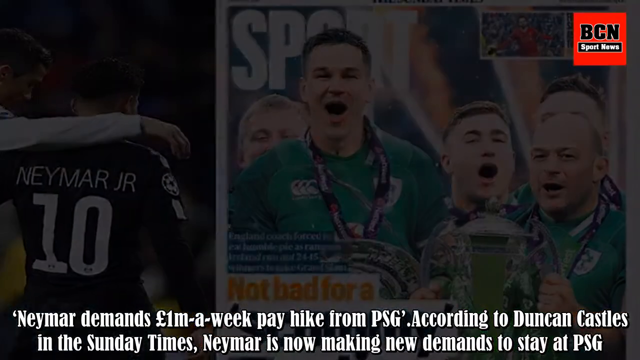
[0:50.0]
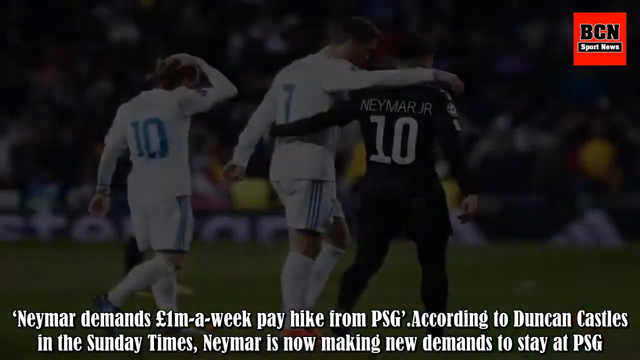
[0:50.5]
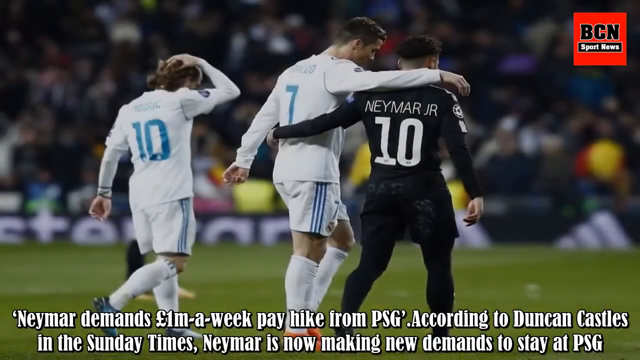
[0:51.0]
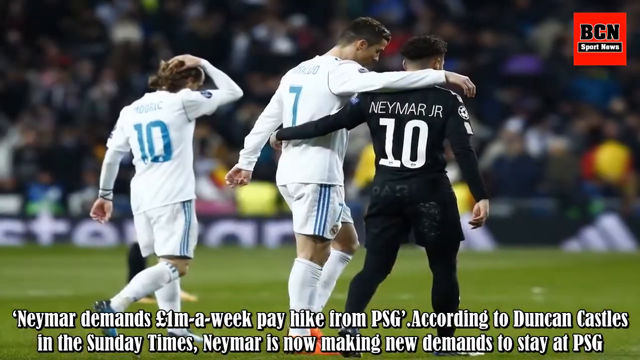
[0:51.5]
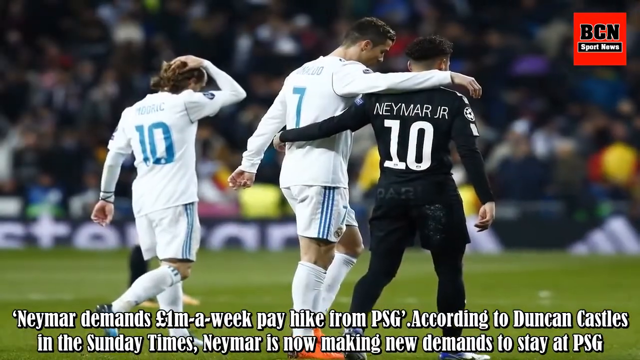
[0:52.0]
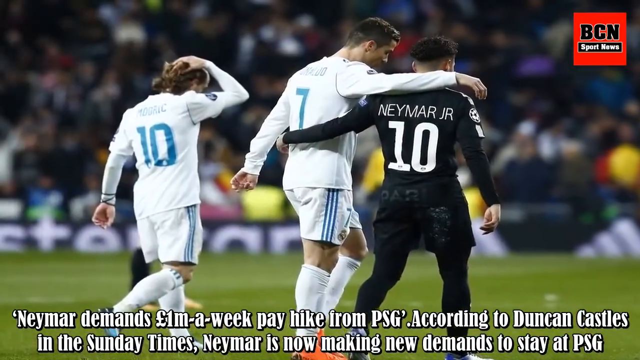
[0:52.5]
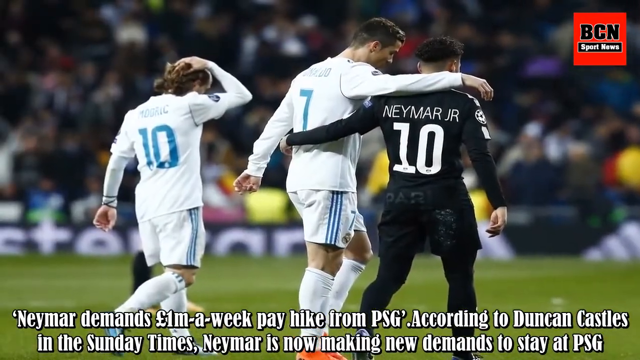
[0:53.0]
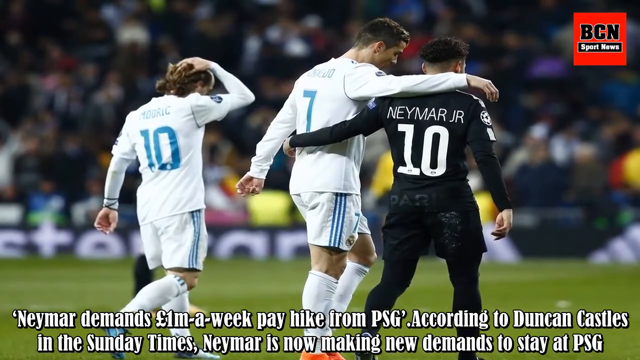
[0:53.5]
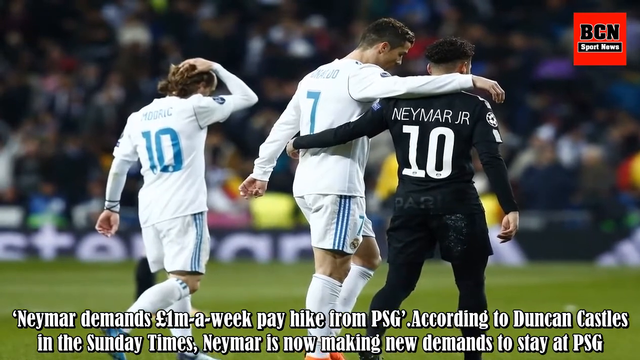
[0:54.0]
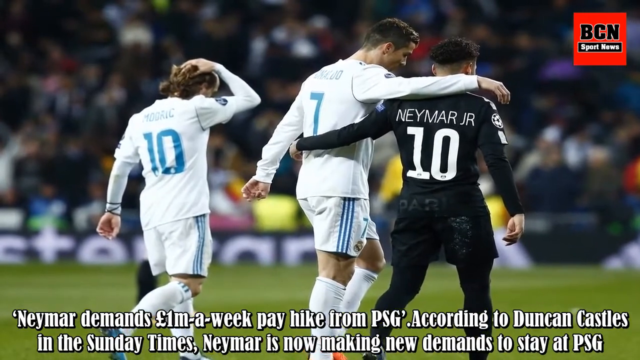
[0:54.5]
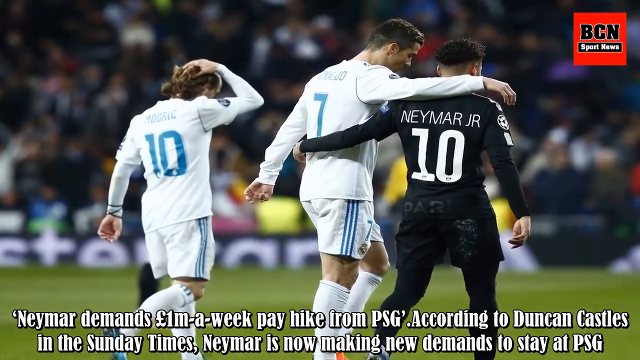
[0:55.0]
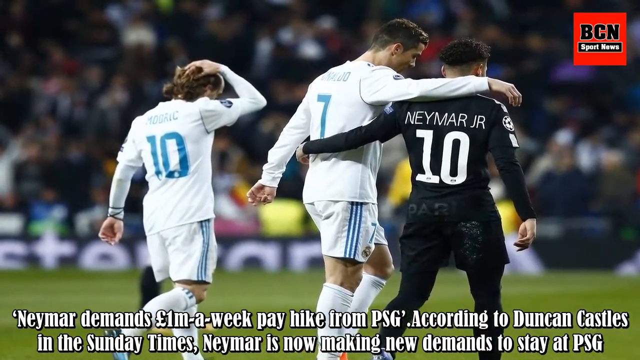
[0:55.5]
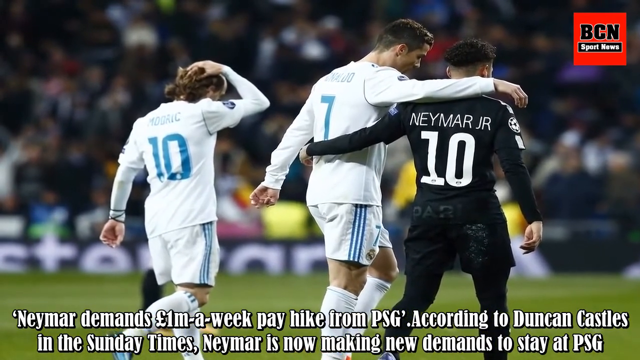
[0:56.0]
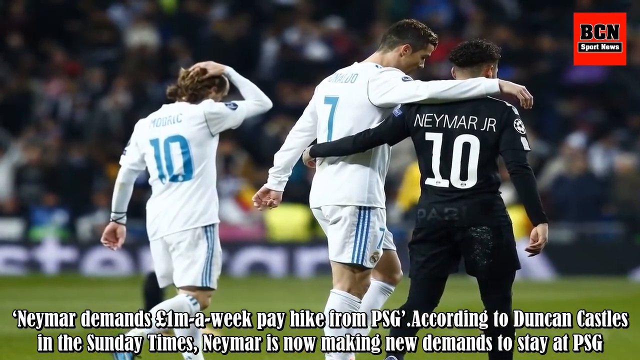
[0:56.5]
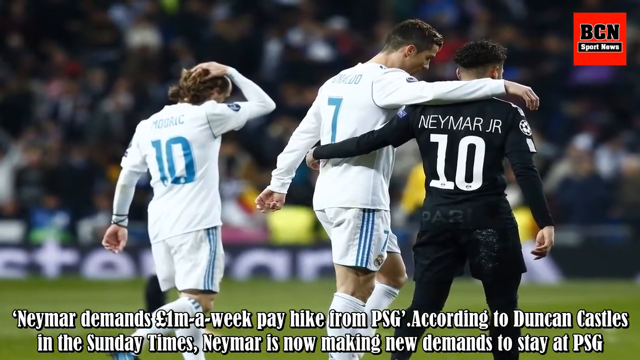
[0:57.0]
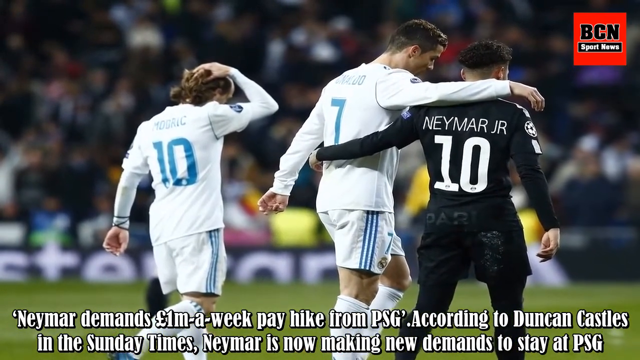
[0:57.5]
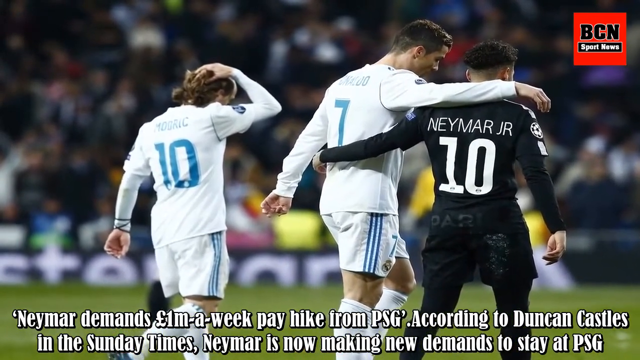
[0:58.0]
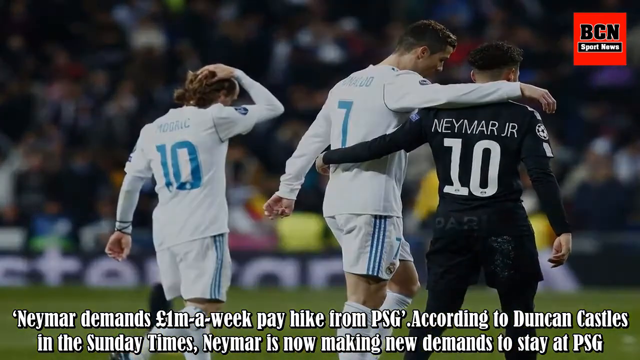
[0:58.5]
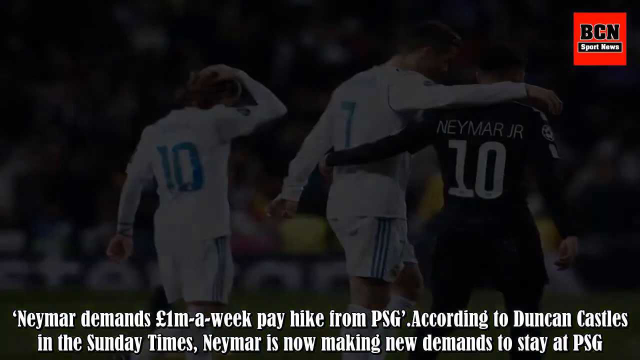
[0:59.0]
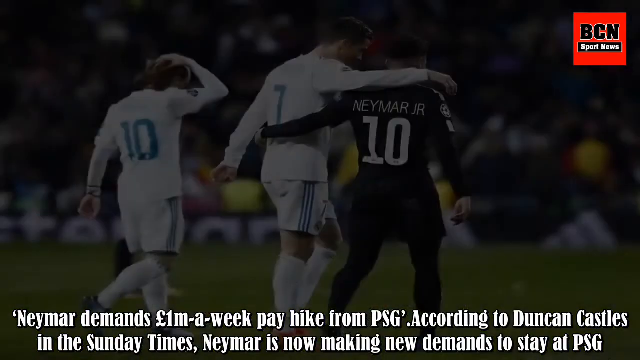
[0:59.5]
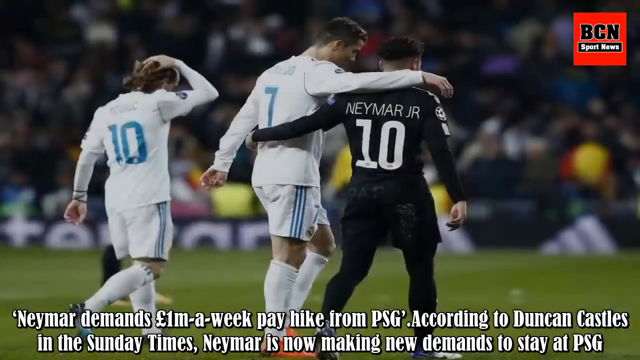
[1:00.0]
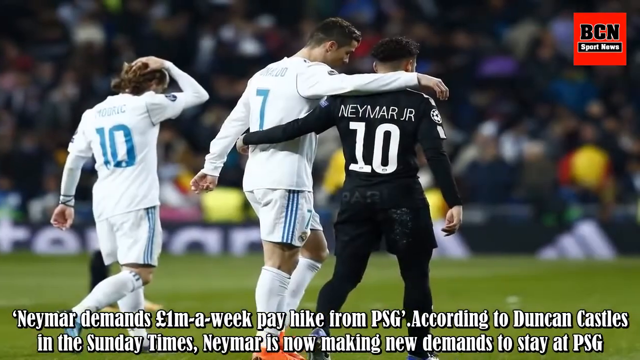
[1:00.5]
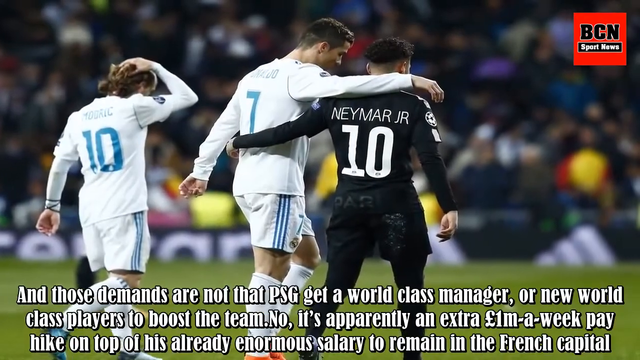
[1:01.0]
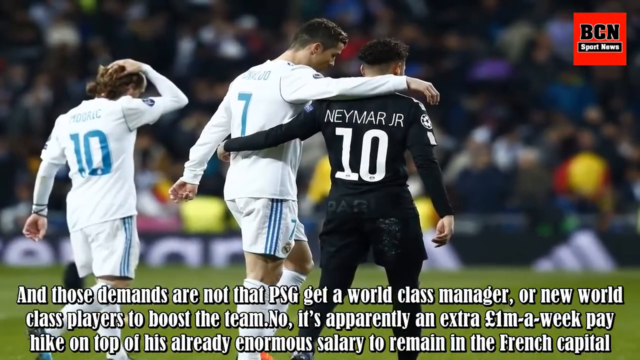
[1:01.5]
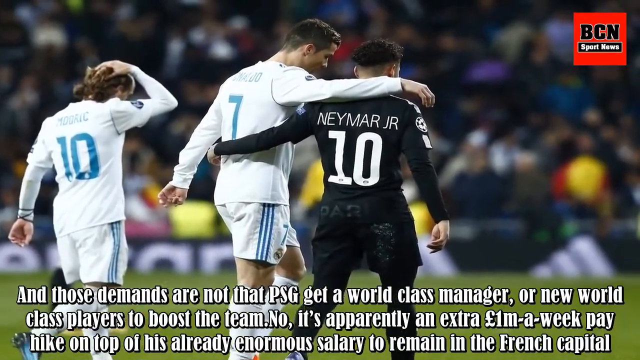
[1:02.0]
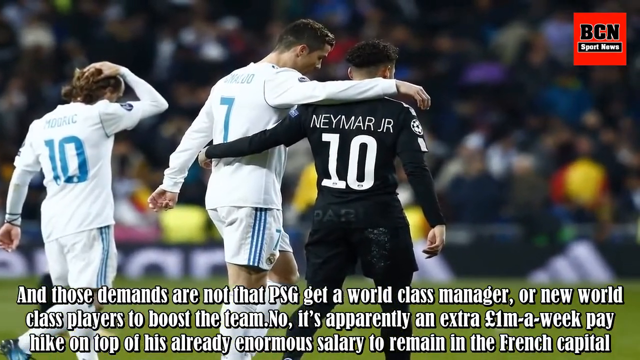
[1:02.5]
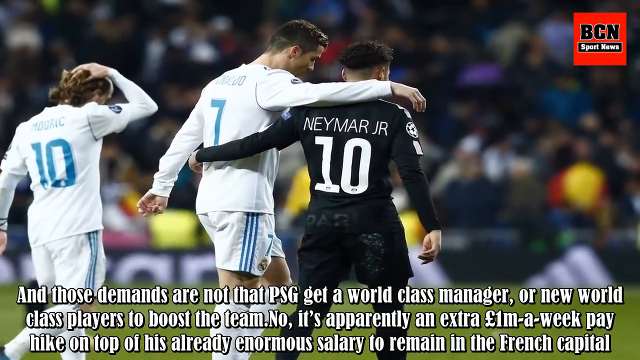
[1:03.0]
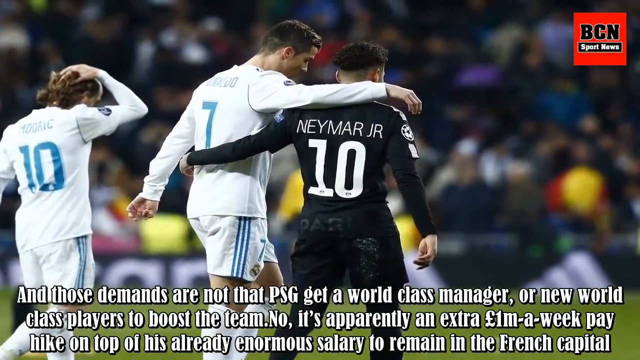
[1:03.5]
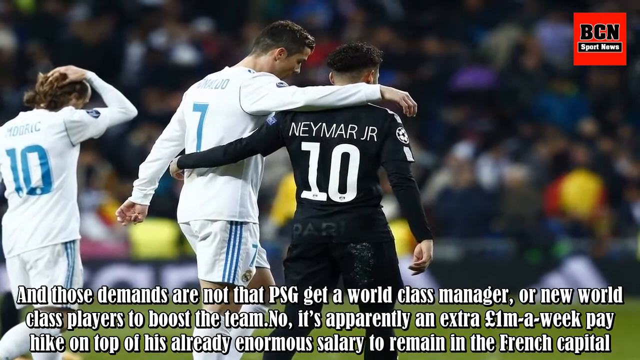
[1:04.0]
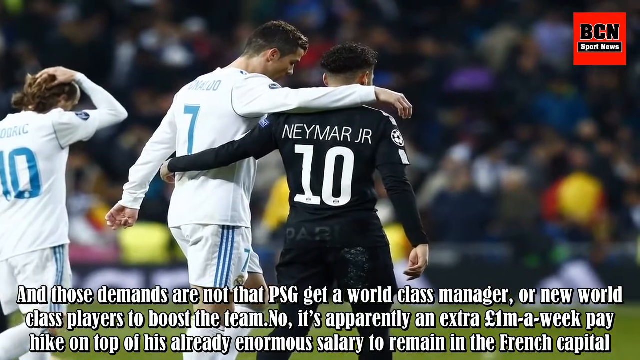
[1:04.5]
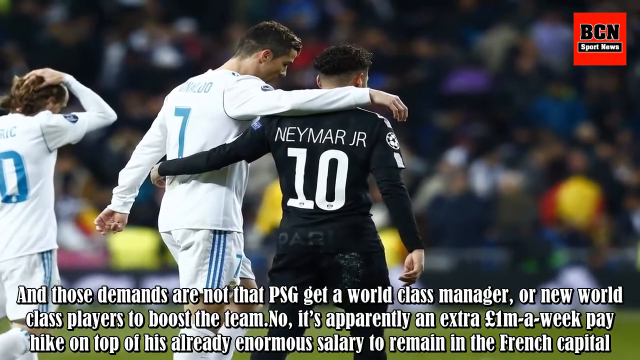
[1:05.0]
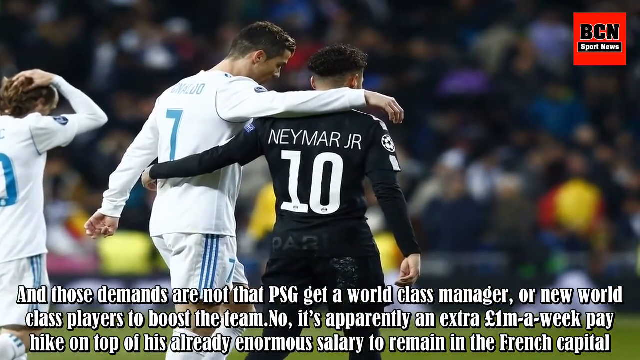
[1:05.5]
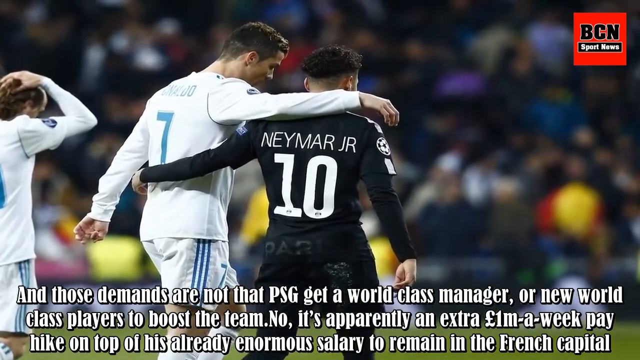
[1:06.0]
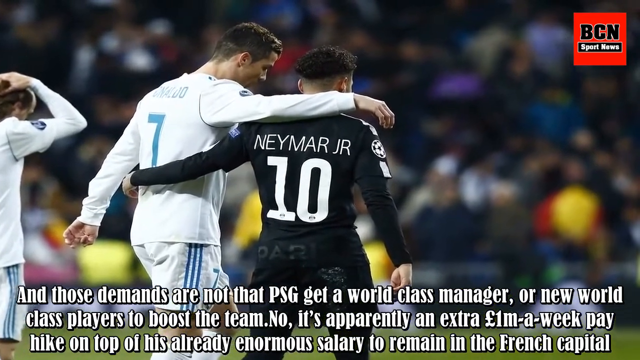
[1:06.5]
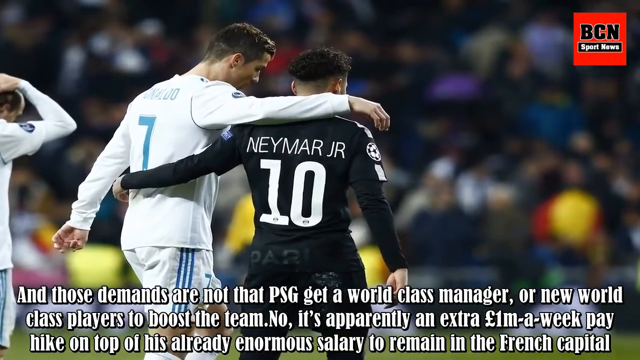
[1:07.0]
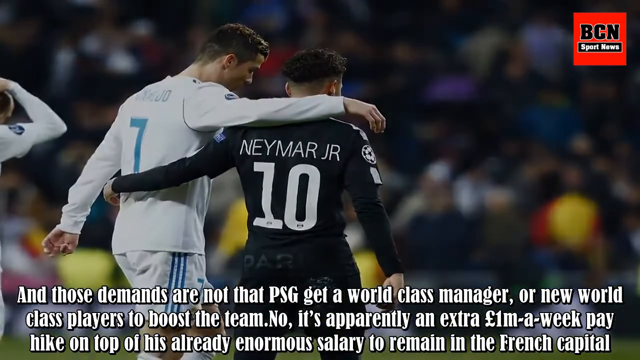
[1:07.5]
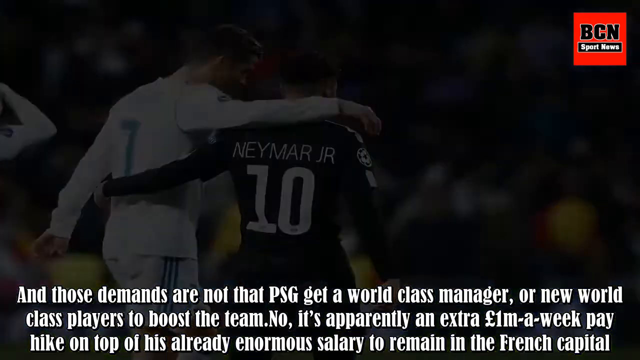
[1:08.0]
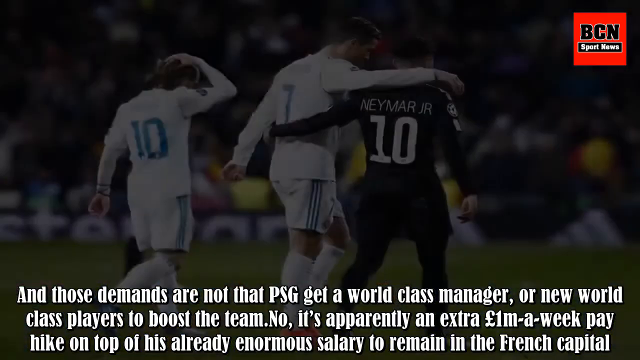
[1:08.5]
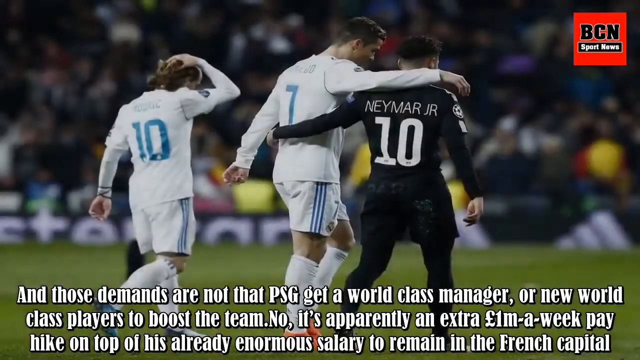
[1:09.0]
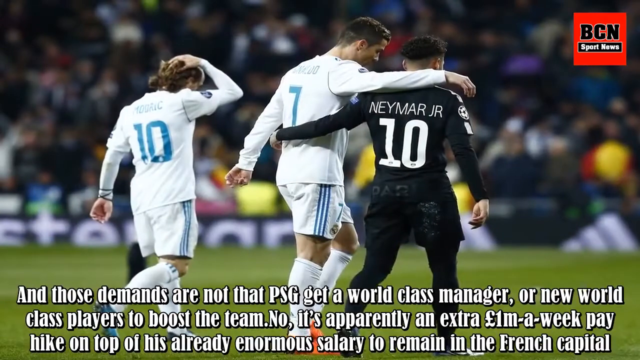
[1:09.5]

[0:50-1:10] White text at the bottom reads: "Neymar demands one million pounds a week paid hike from PSG, according to Dunham-Castles in the Sunday Times. Neymar is now making new demands to stay at PSG." Another picture shows Ronaldo with his right arm around Neymar, and Neymar with his left arm around Ronaldo's waist. More white text appears at the very bottom: "and those demands are not that PSG get a world class manager or new world class players to boost the team. No, it's apparently an extra 1 million pounds a week pay hike on top of his already". A close-up then shows Neymar from behind in his black jersey, with a white soccer ball logo on his right shoulder, the number 10 and "Neymar Jr." on the back, as he faces the crowd and walks off the field.